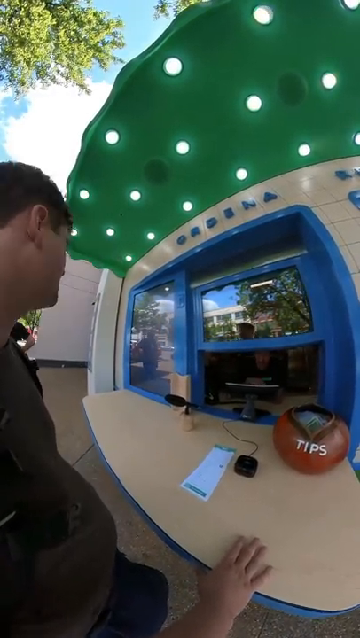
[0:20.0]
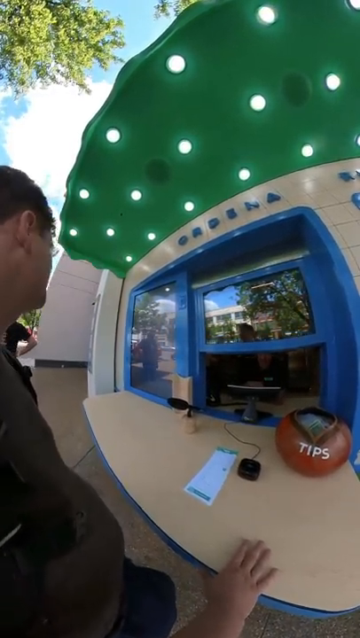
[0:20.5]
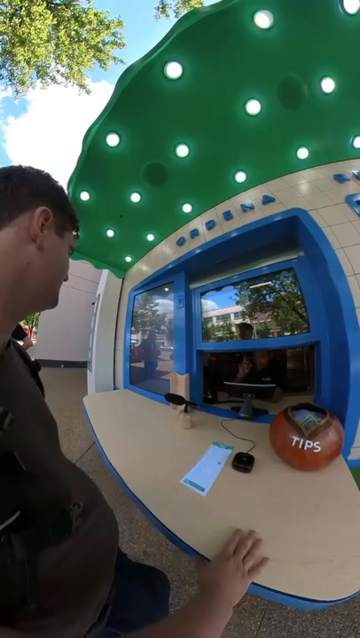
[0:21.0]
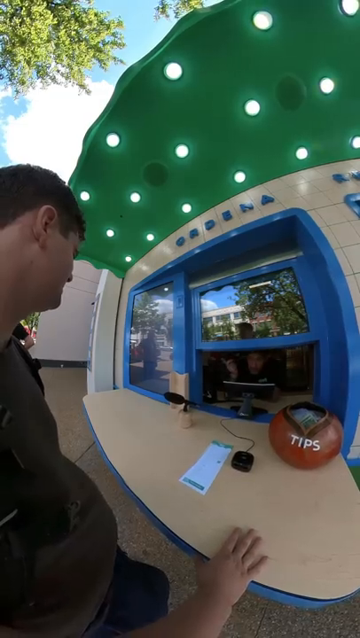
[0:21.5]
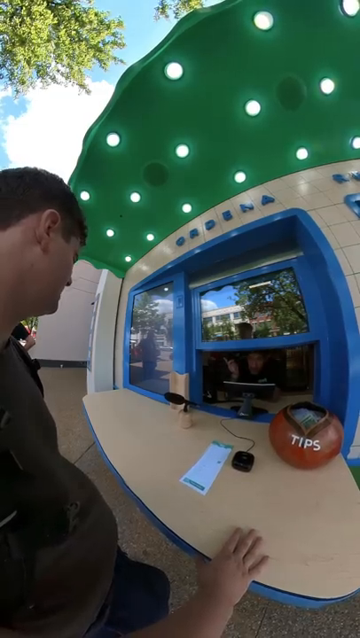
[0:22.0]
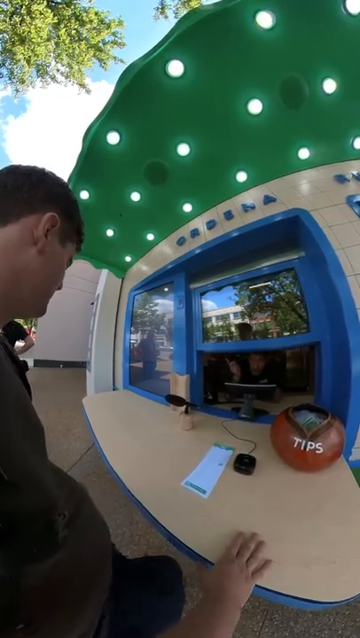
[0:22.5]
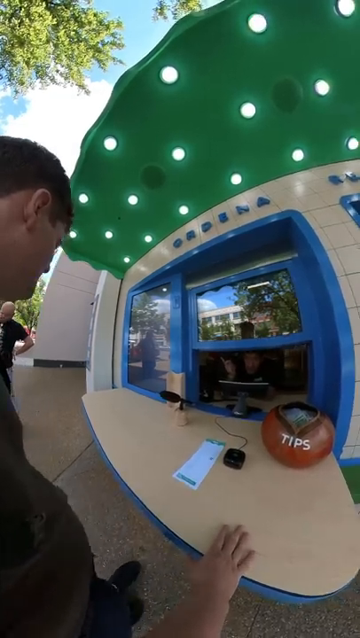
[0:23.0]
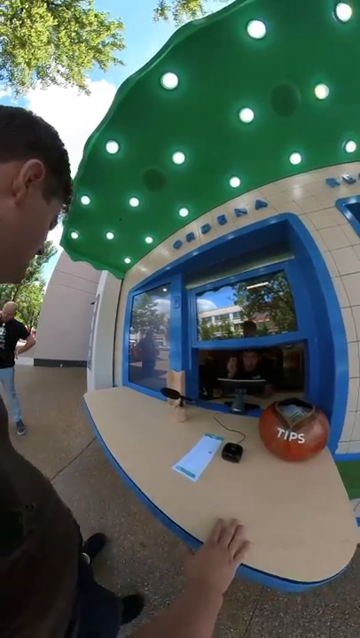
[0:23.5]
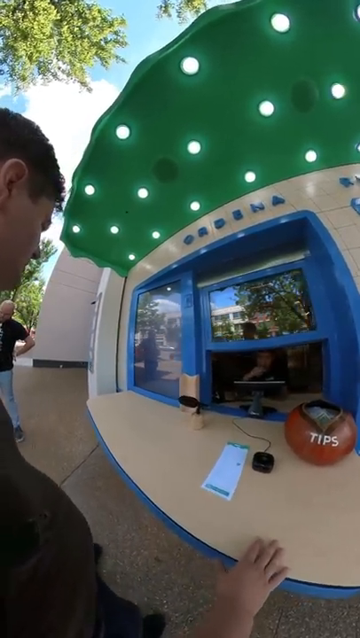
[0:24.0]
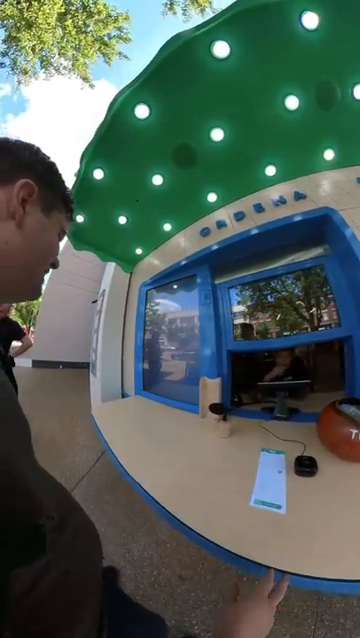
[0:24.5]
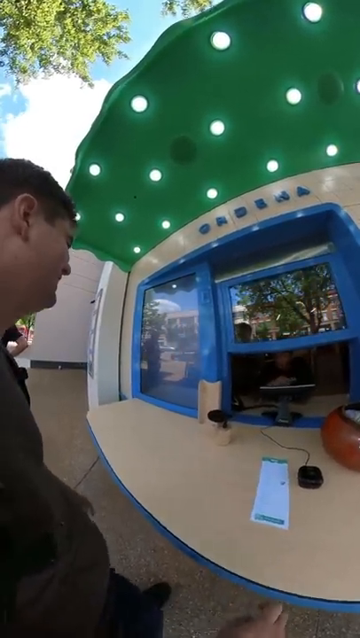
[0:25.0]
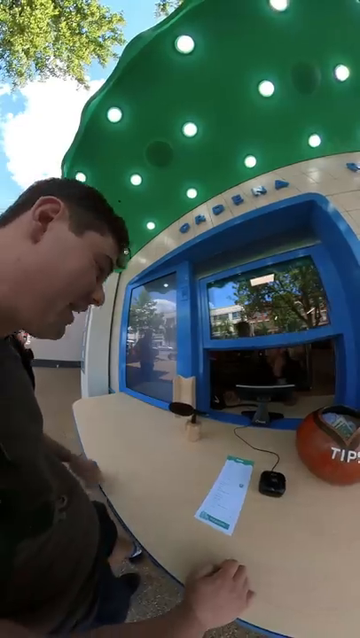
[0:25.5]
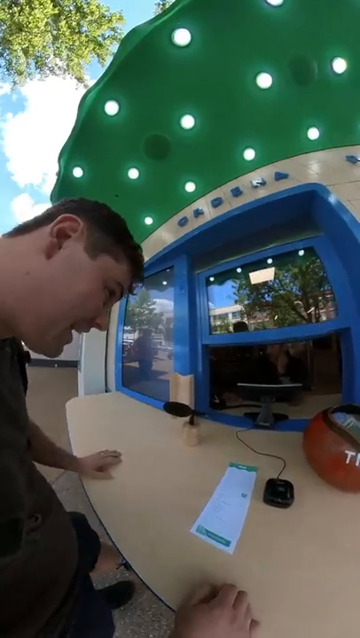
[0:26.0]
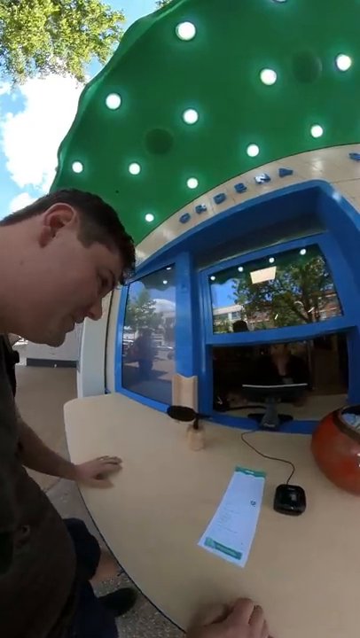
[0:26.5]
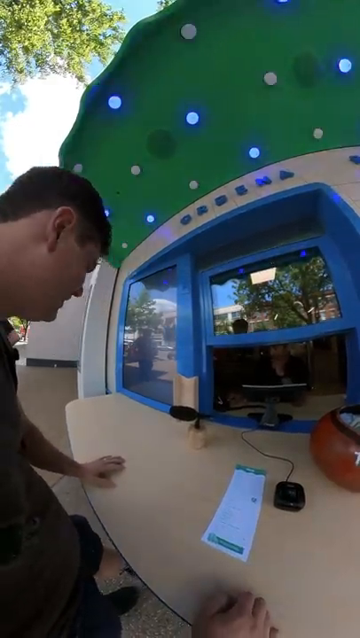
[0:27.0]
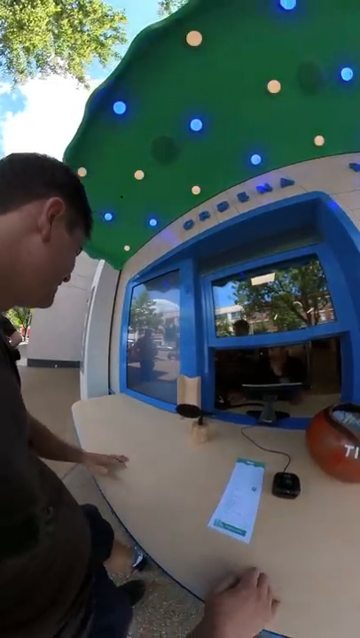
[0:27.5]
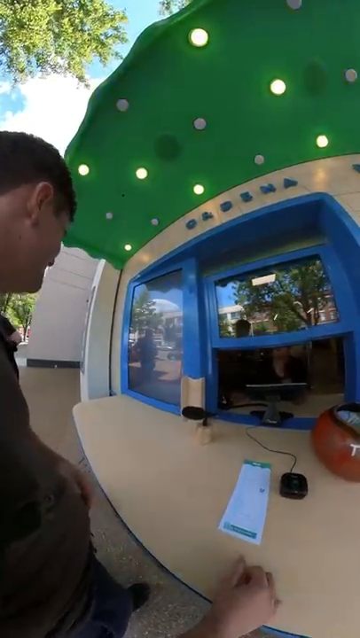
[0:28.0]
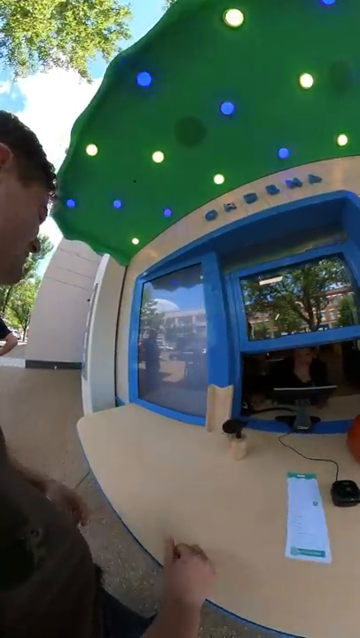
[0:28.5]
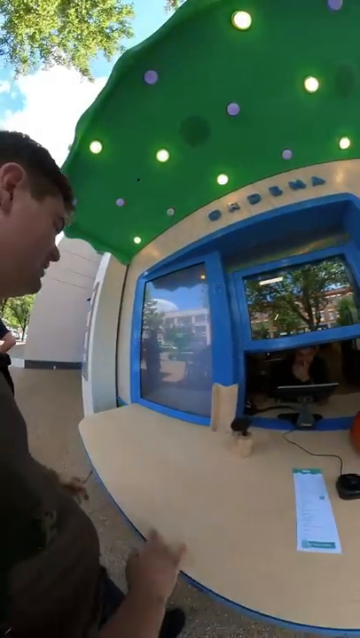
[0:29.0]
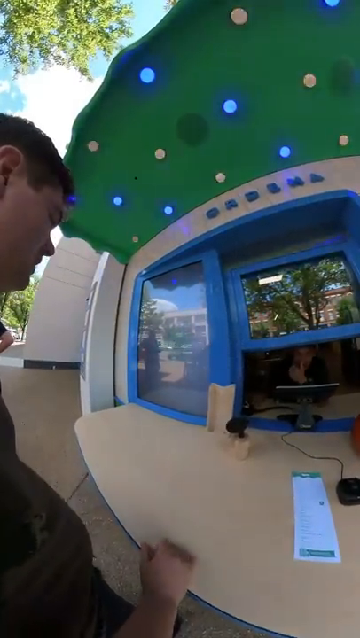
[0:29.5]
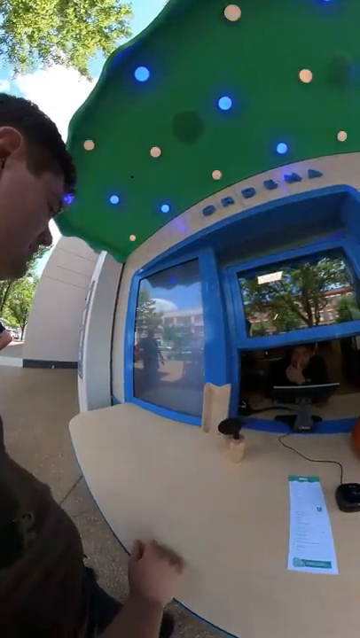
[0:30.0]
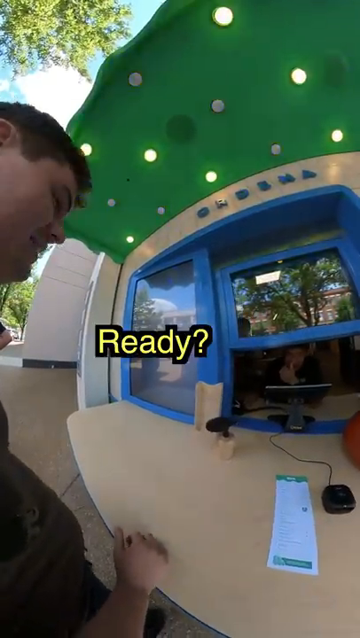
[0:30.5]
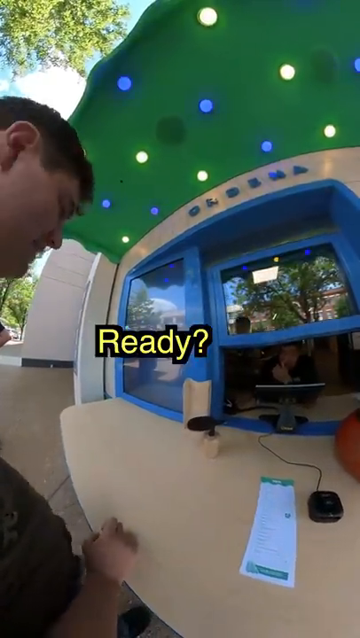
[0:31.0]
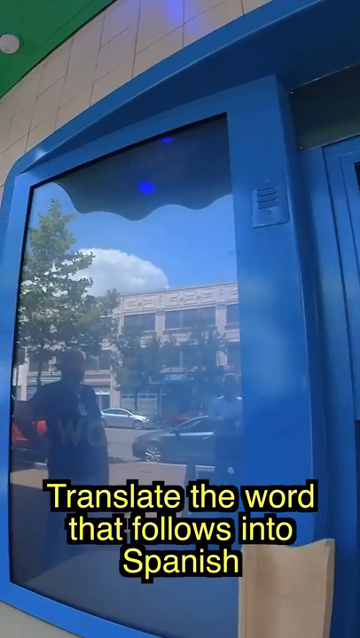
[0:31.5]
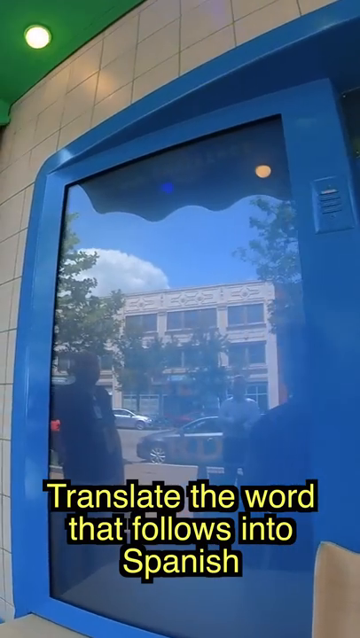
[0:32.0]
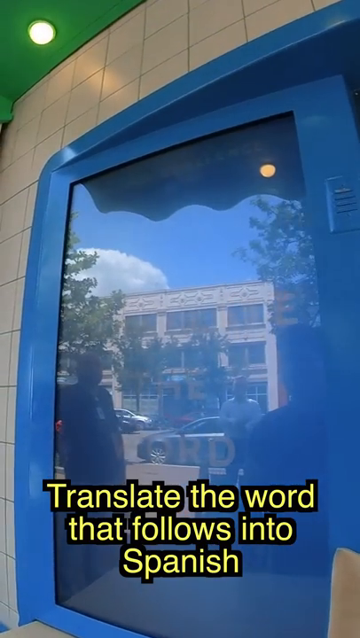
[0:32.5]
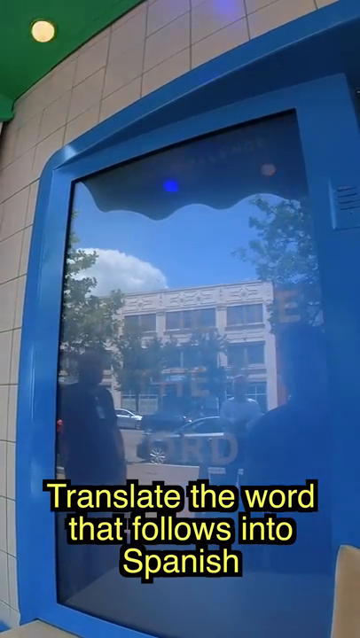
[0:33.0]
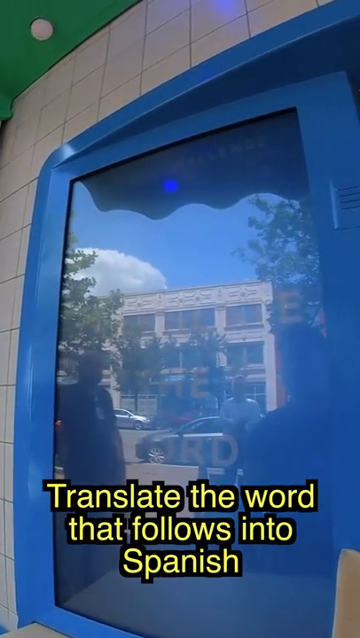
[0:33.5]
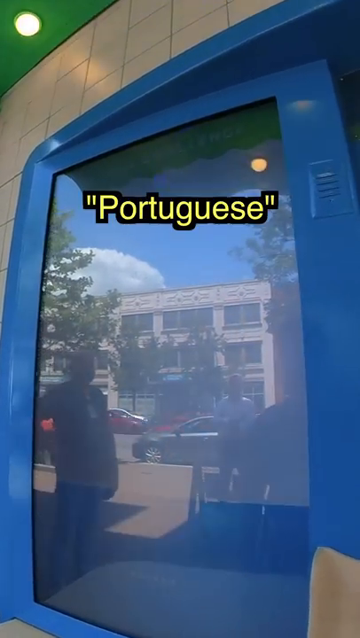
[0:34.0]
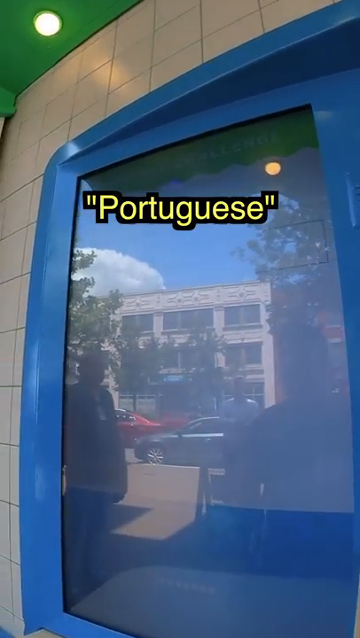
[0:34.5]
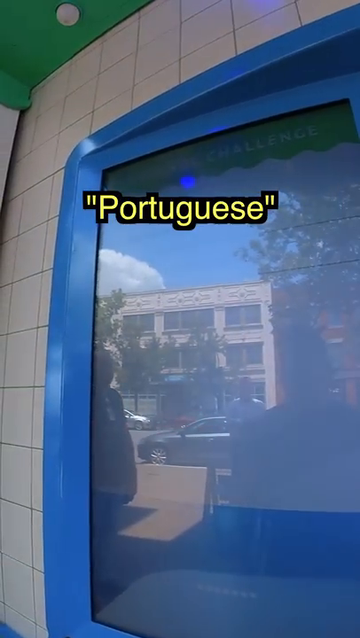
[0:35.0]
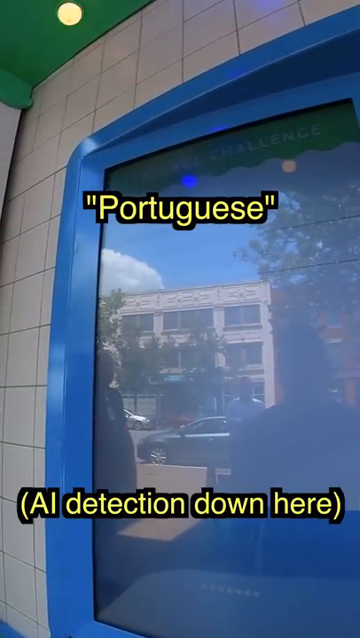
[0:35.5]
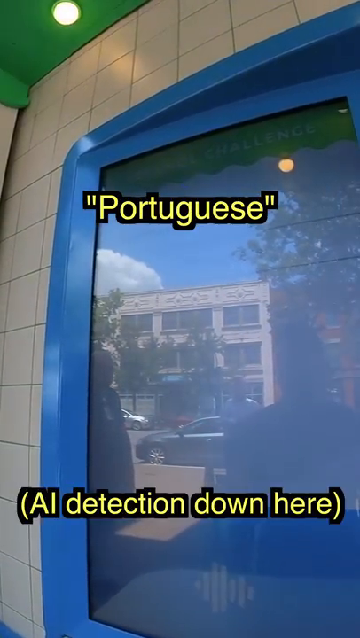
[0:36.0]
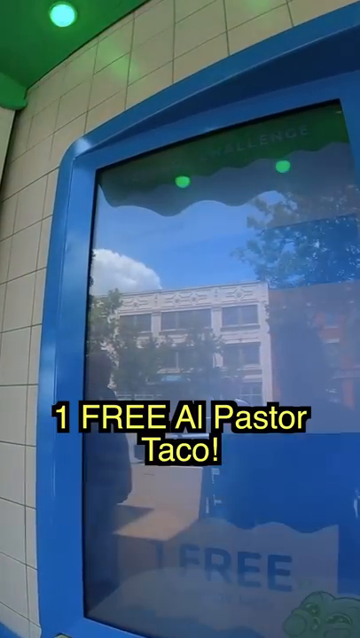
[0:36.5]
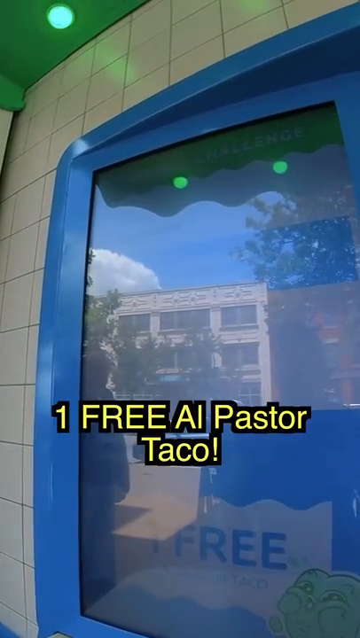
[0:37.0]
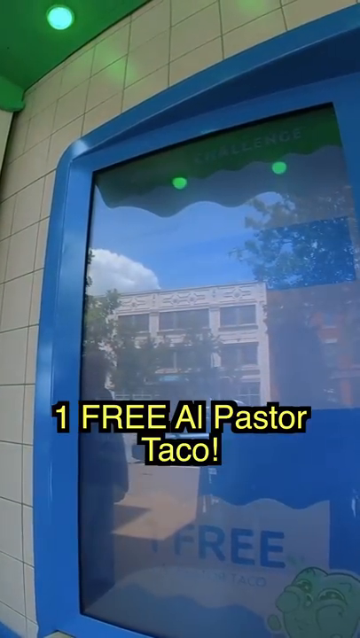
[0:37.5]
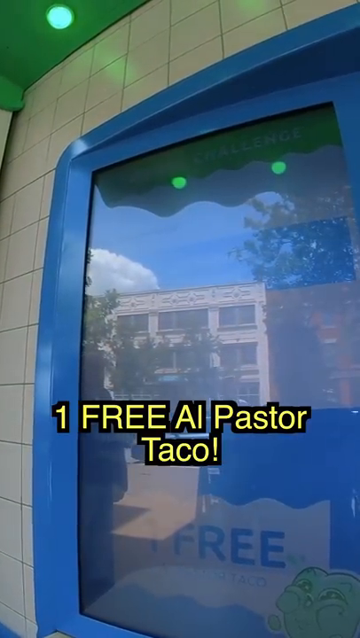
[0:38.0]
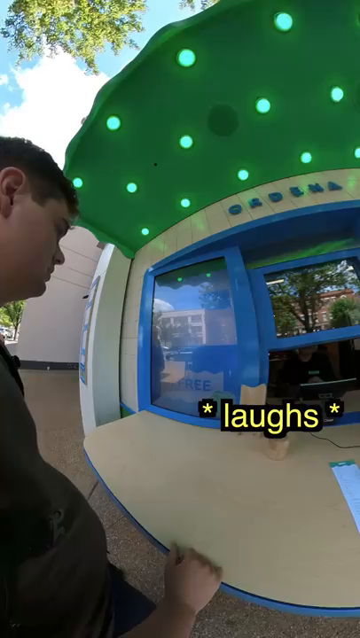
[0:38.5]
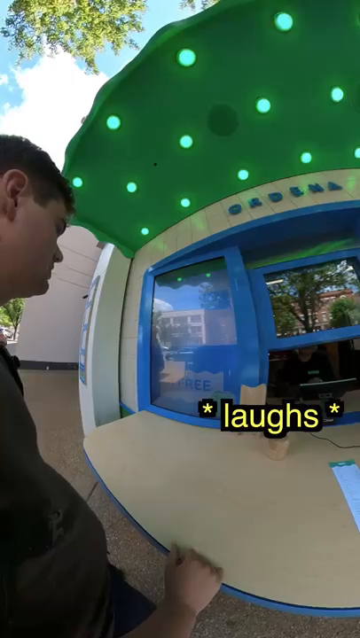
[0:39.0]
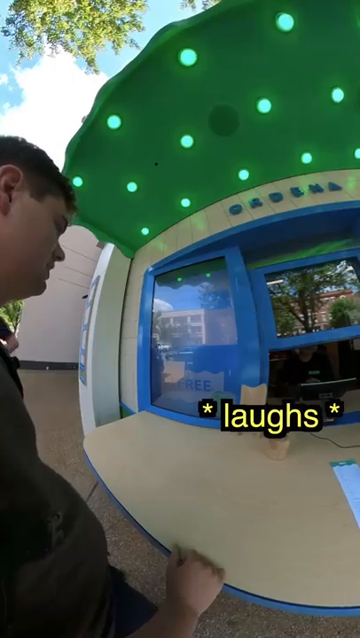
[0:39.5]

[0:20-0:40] The man is still at the blue window beneath a green section that may be an awning, which has flashing lights on it. Text appears on the window, seemingly from a conversation the man is having, suggesting a possibly automatic ordering system, maybe one using AI. The text includes "translate the word that follows into Spanish, Portuguese" and mentions one free something, and somebody laughs. The video goes back and forth between this text and the man at the window ordering; it looks like some kind of AI system inside the restaurant is taking his order. In the bottom right of the frame is a picture of a person's face, possibly the man at the window, though it is hard to tell.